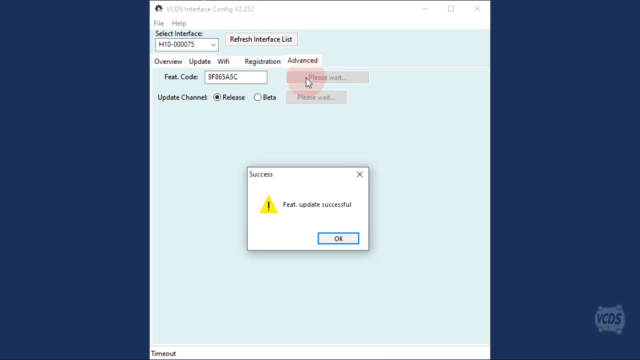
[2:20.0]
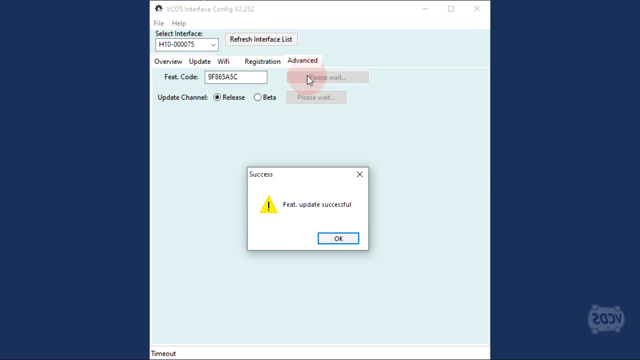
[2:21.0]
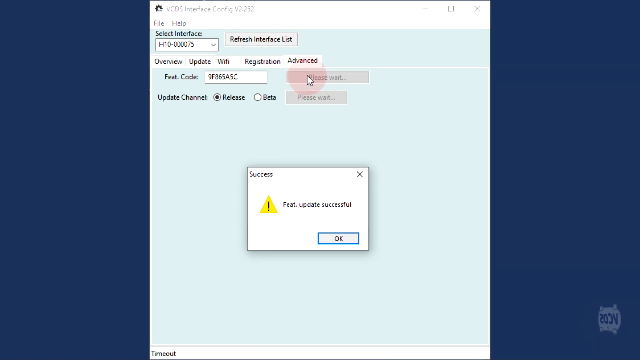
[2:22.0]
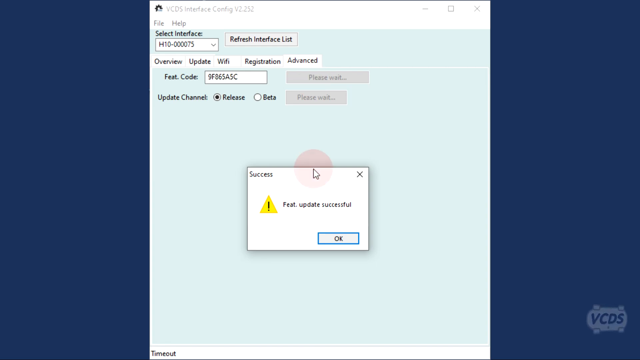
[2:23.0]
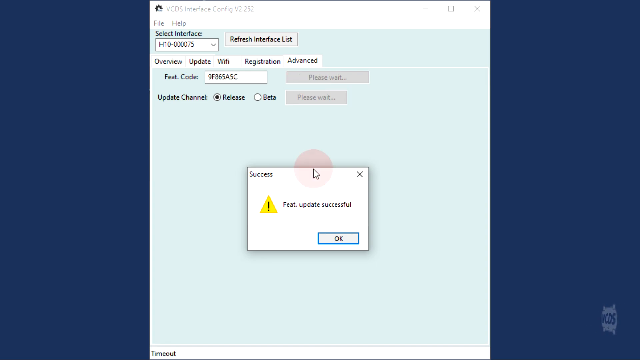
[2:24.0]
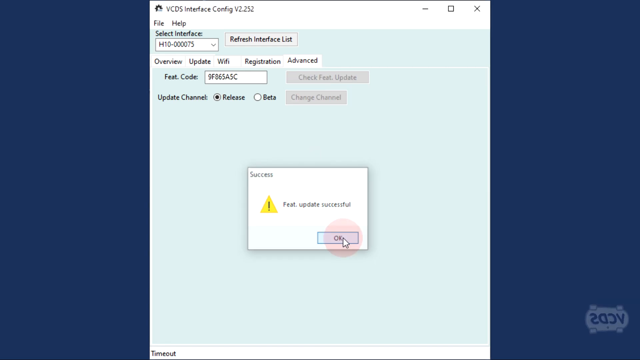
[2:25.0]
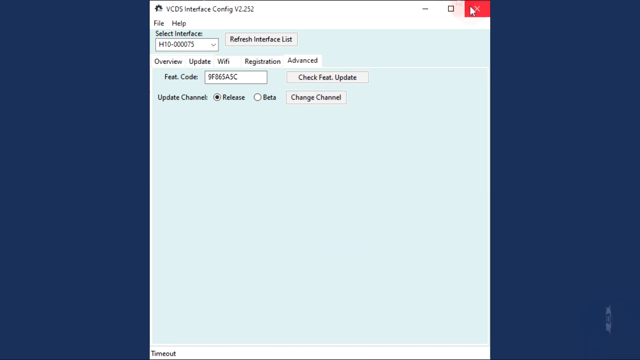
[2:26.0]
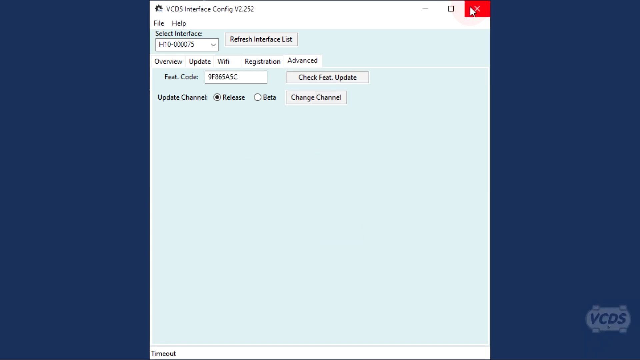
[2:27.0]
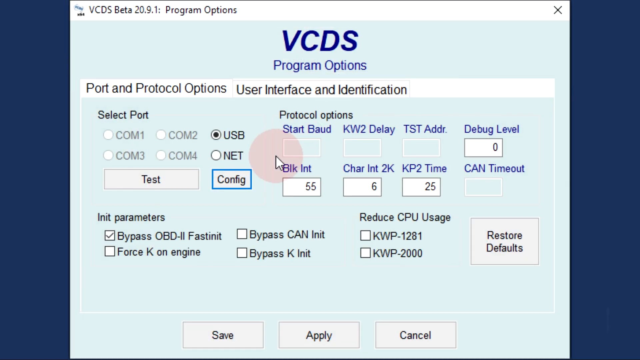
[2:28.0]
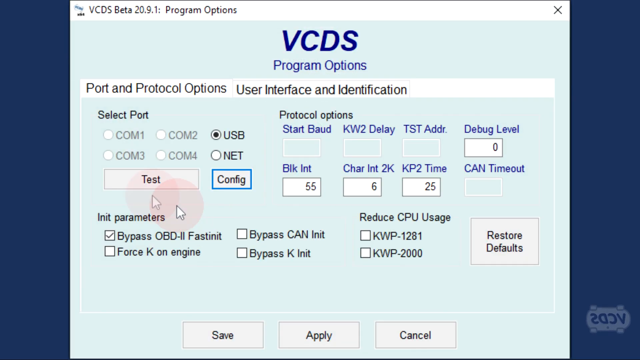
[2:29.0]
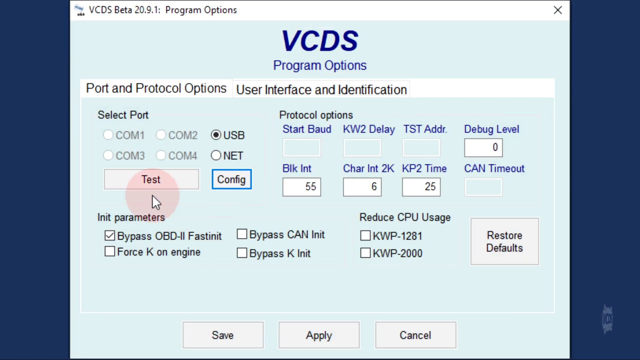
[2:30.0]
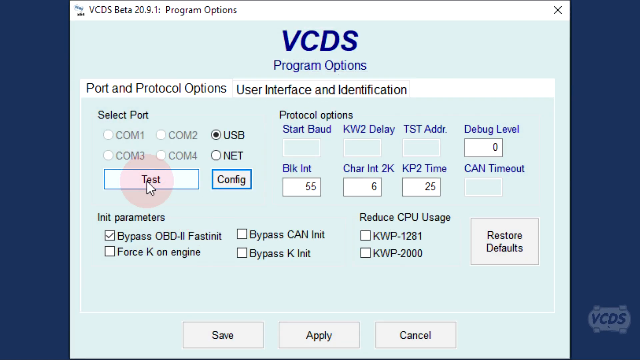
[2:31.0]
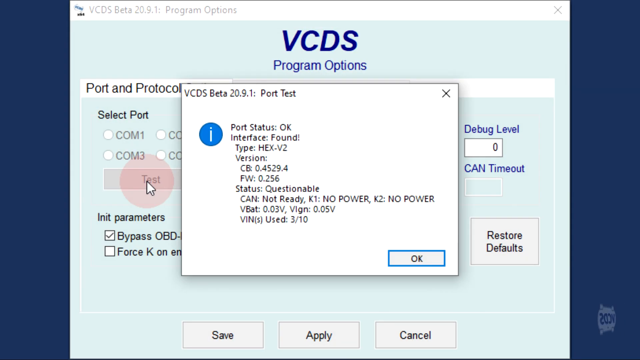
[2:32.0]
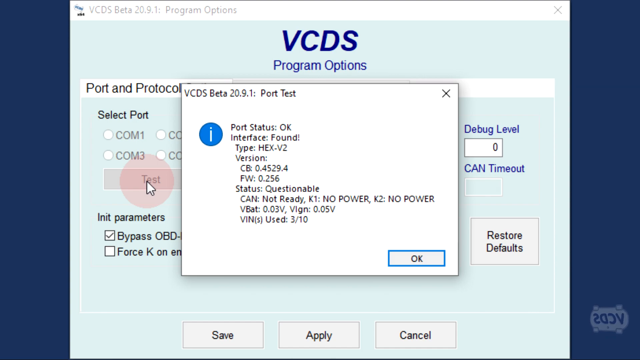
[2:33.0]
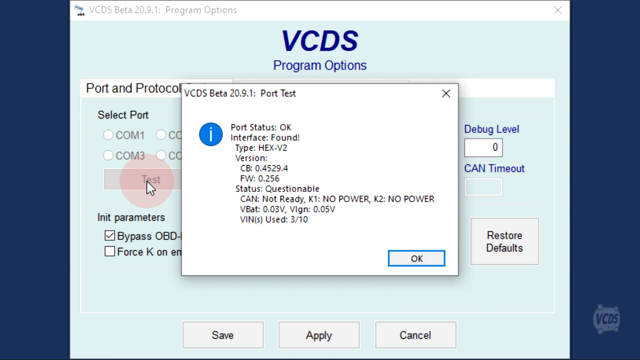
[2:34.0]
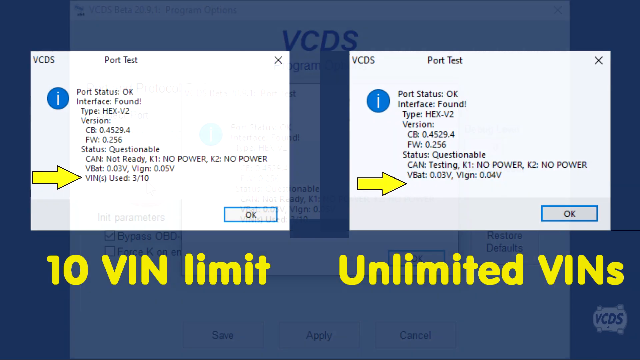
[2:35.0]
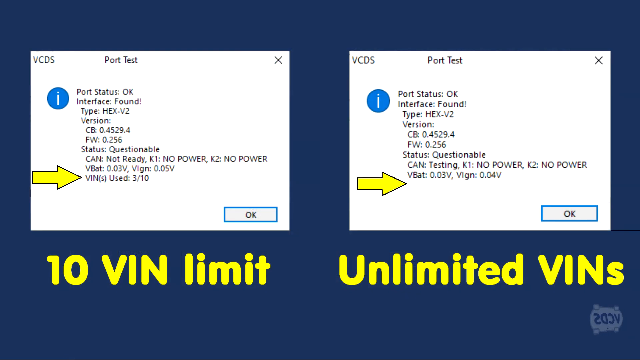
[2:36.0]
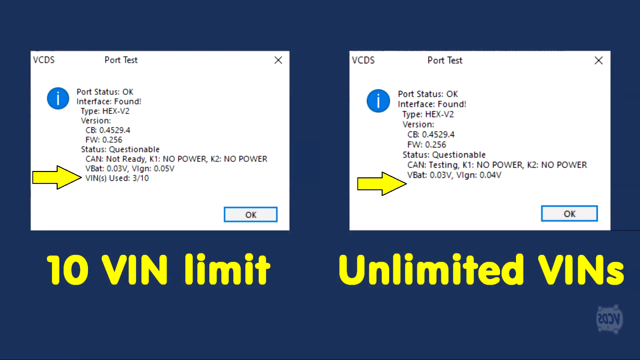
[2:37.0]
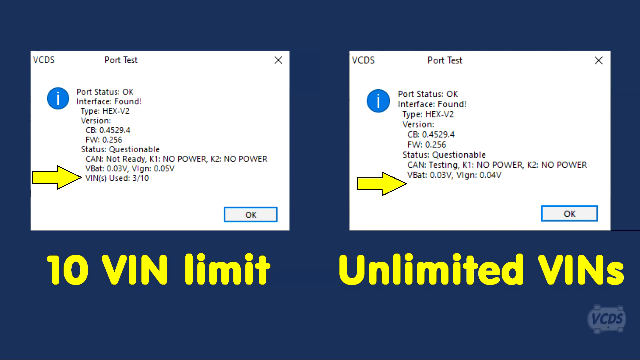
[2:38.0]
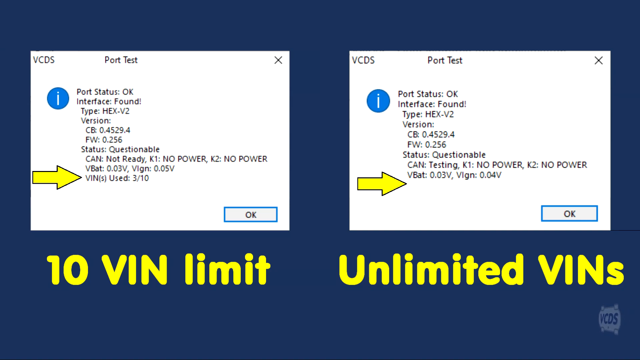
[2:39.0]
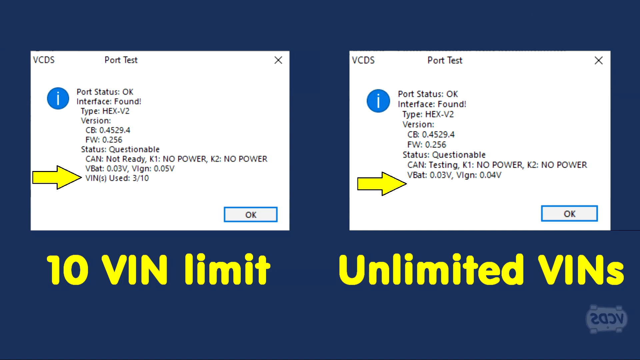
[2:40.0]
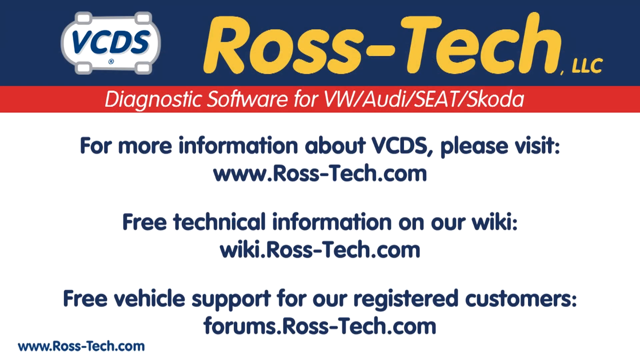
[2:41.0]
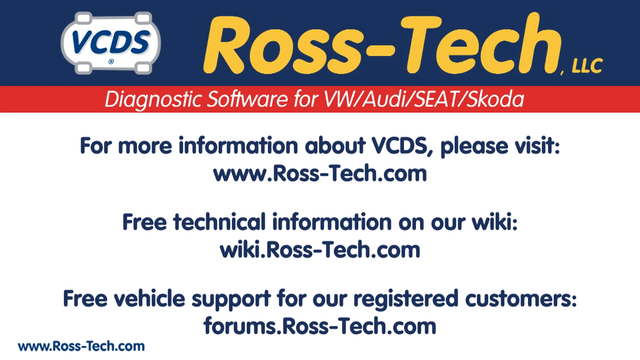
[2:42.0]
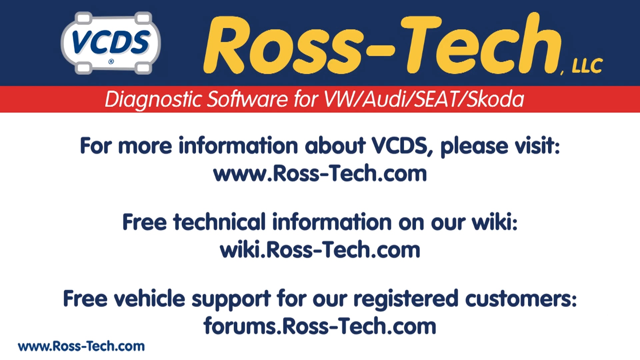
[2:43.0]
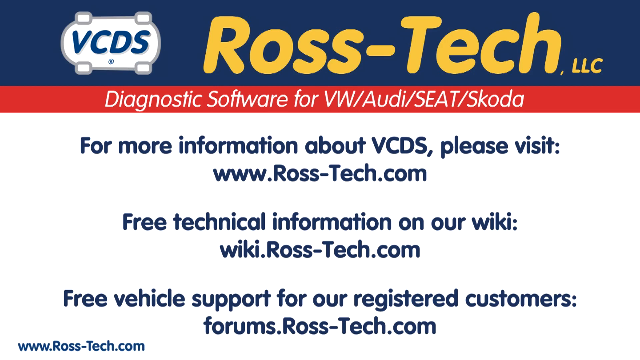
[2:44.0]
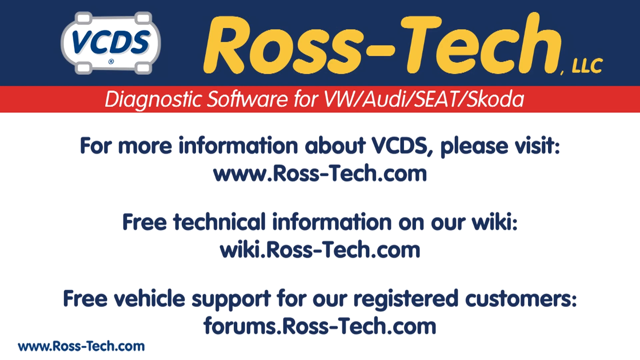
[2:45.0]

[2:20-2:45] A laptop shows a page with a midnight blue background and an open mint green box. In the upper left corner is a button for selecting the interface, and a white button with black text reads "Refresh Interface List." Below that is a menu of buttons reading, from left to right, "Overview," "Update," "Wi-Fi," "Registration" and "Advanced." The mouse hovers over a "Please Wait" button, and to the left of it is a feature code field where someone has entered a code that apparently reads "NF865ASC." Below are two options for "Update Channel," with the release option selected. A small white pop-up underneath reads "Success" and "Featured Update Successful," with "OK" below right. After OK is pressed, another screen appears, and the mouse moves around and clicks the test button on the center left.